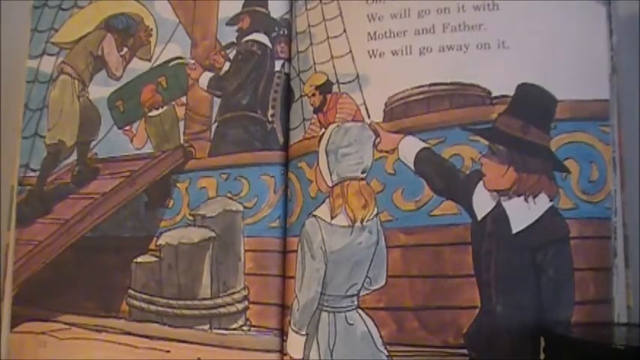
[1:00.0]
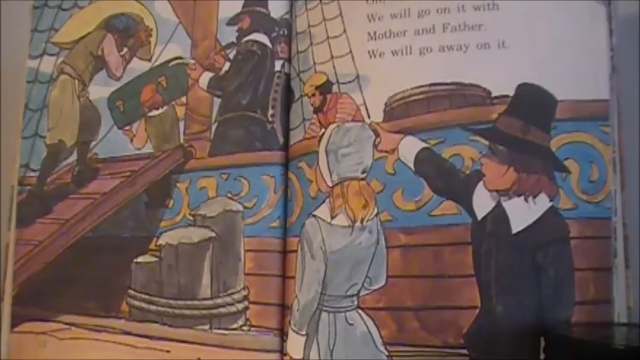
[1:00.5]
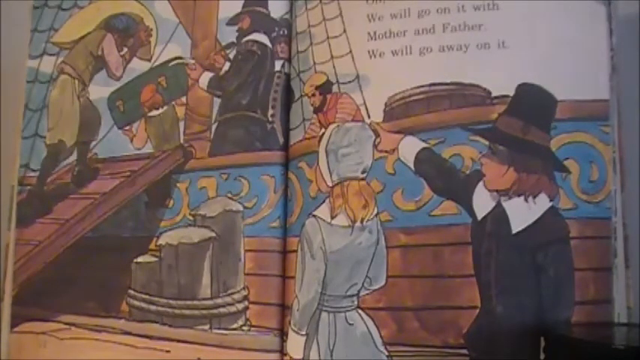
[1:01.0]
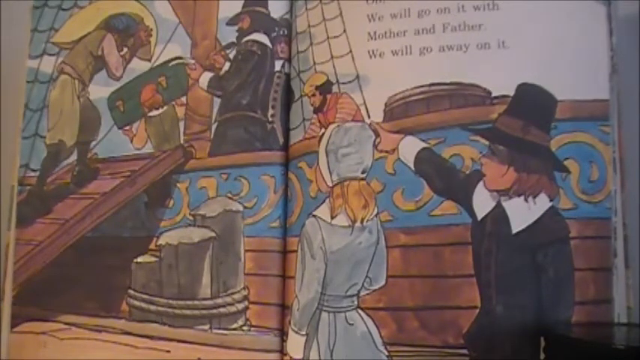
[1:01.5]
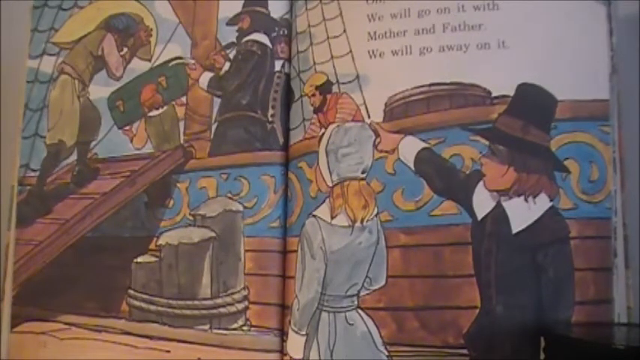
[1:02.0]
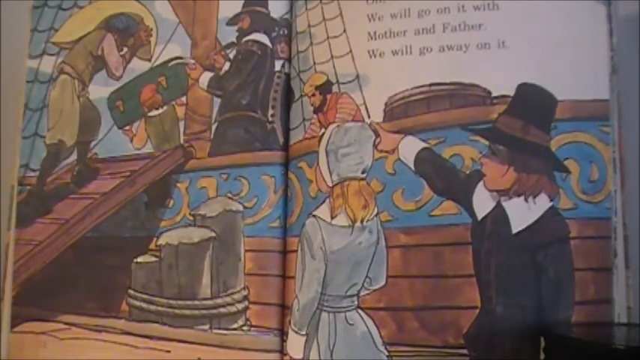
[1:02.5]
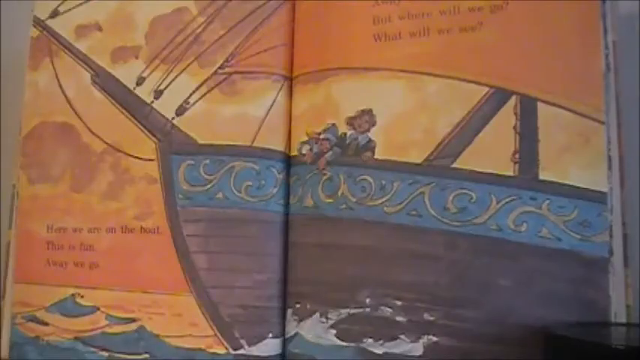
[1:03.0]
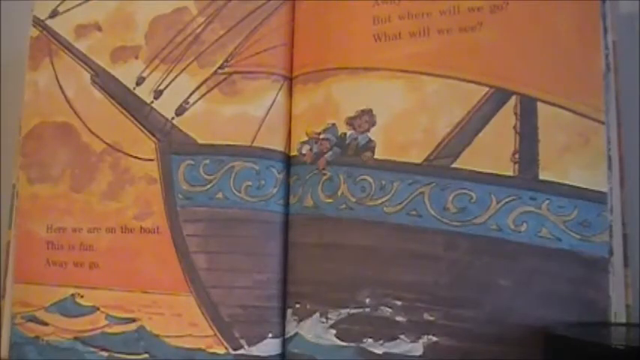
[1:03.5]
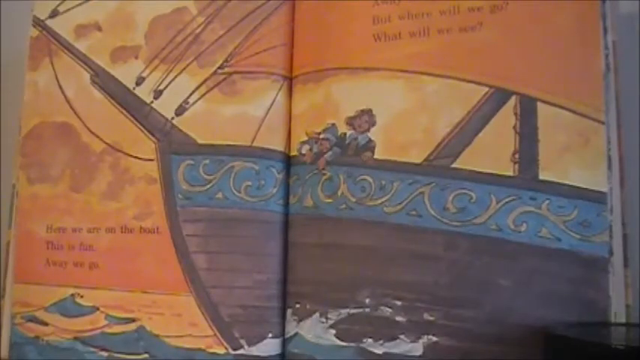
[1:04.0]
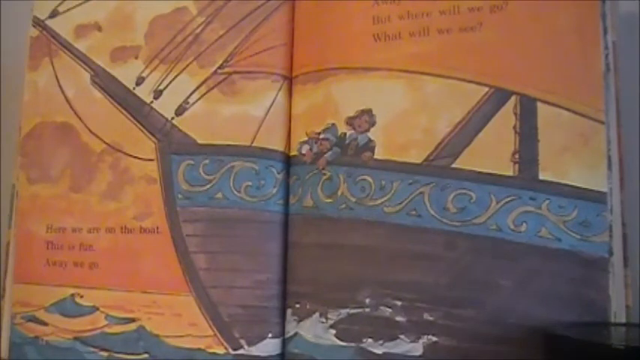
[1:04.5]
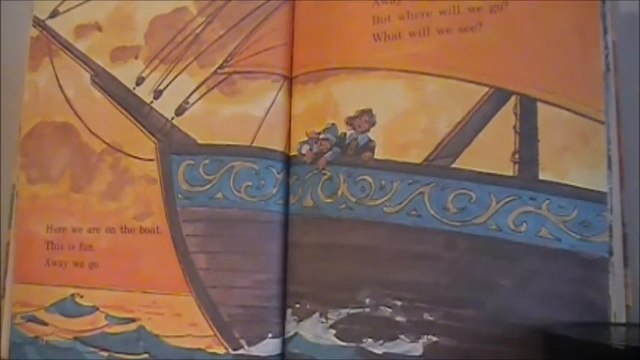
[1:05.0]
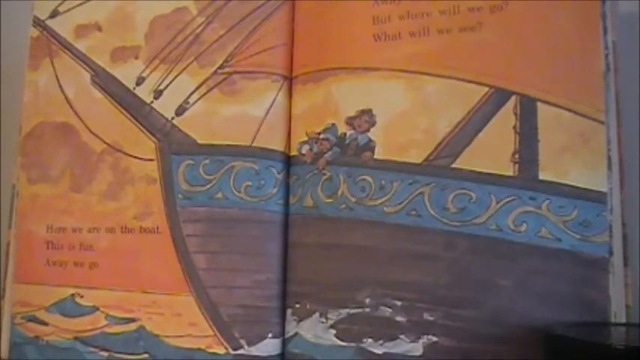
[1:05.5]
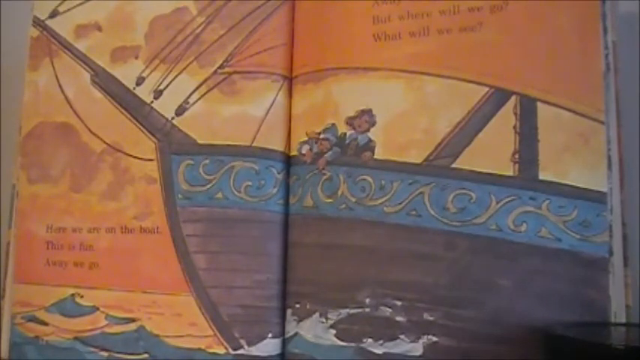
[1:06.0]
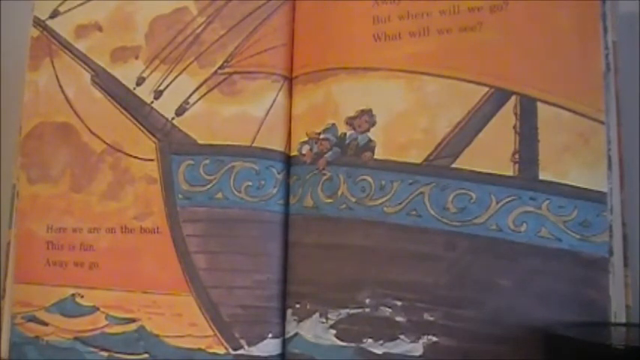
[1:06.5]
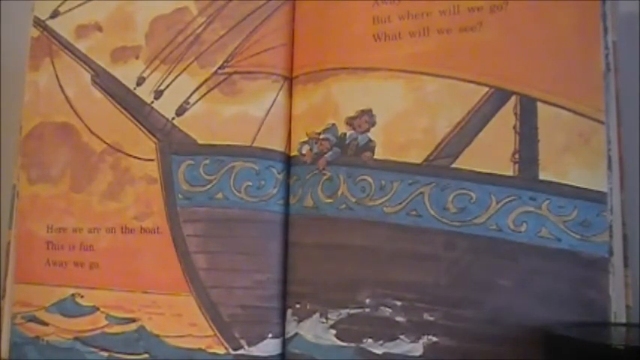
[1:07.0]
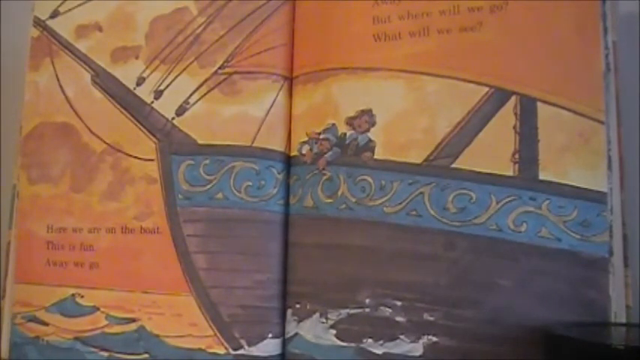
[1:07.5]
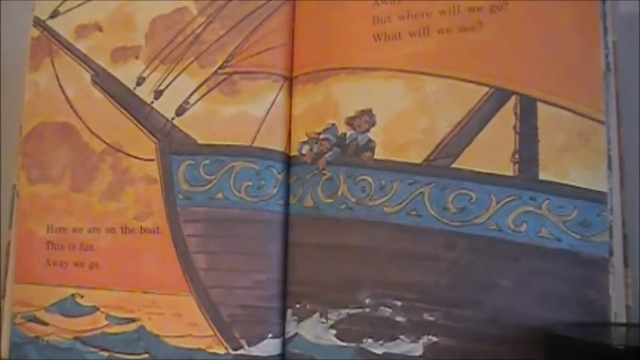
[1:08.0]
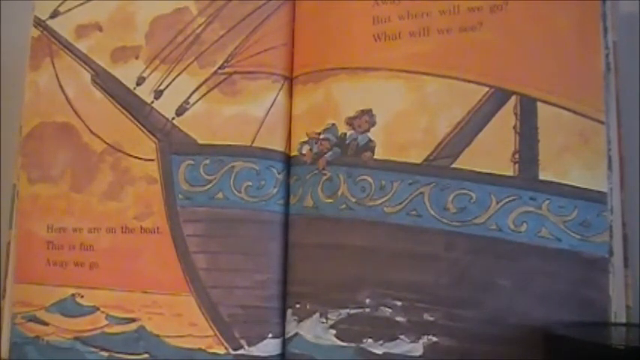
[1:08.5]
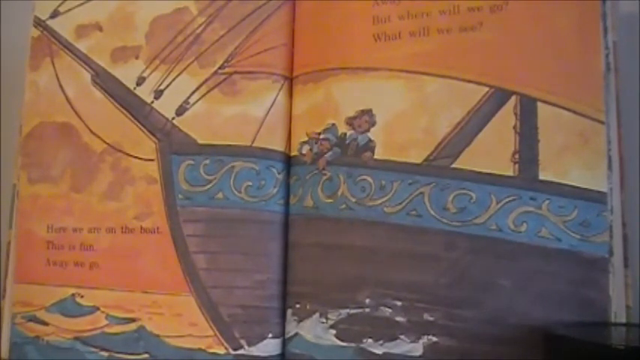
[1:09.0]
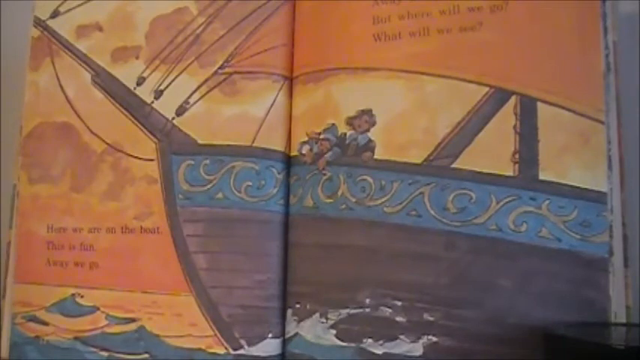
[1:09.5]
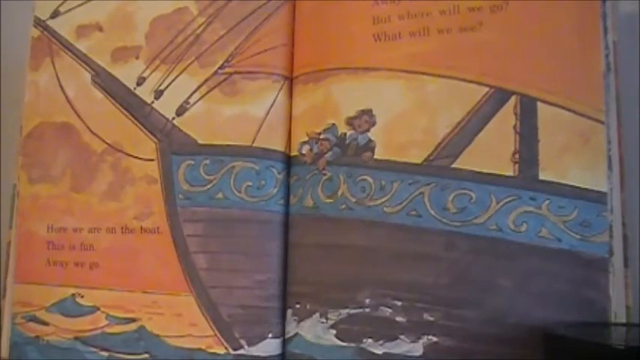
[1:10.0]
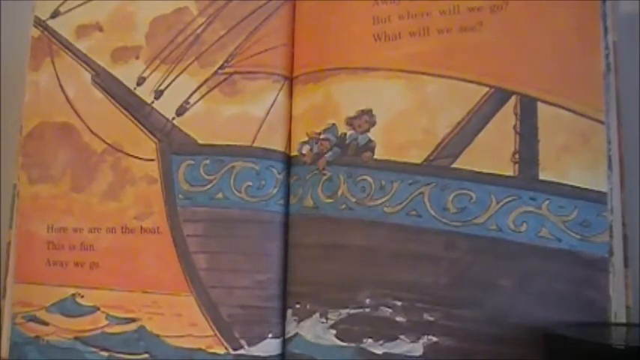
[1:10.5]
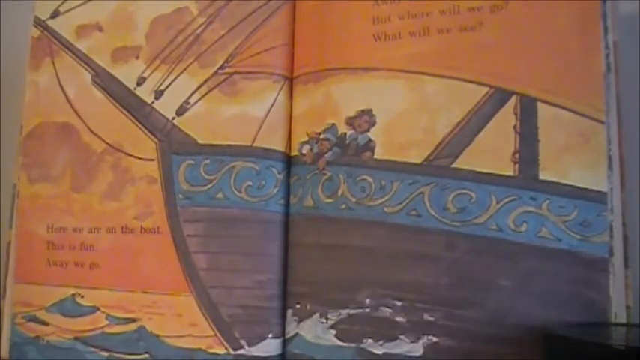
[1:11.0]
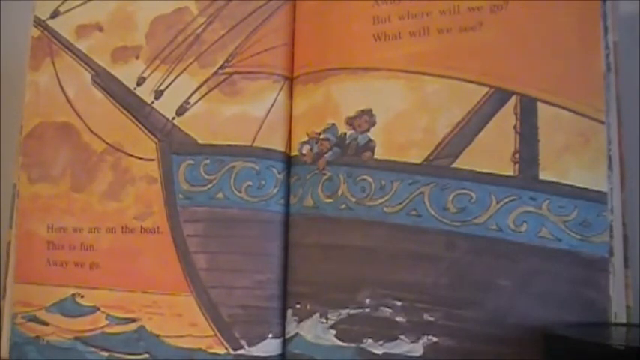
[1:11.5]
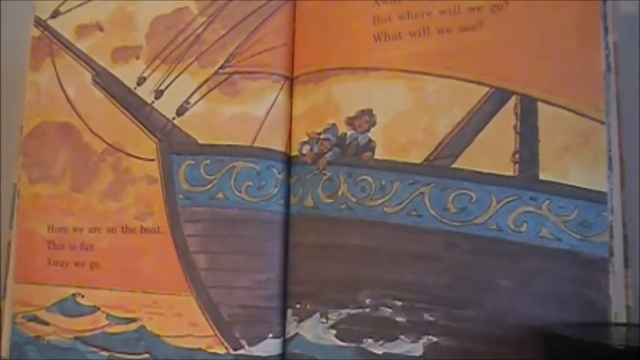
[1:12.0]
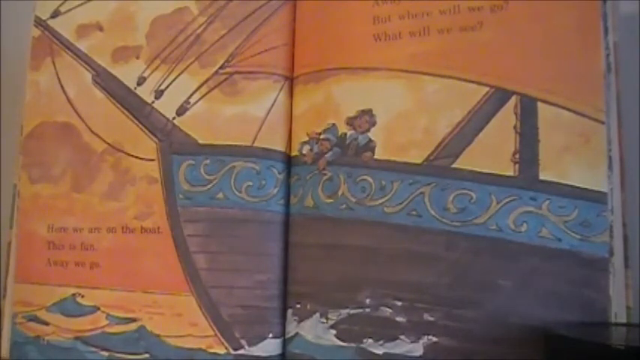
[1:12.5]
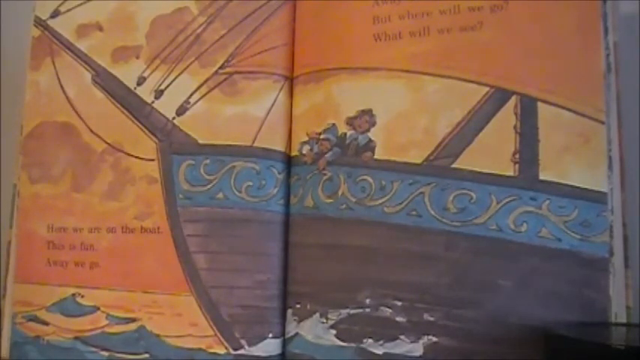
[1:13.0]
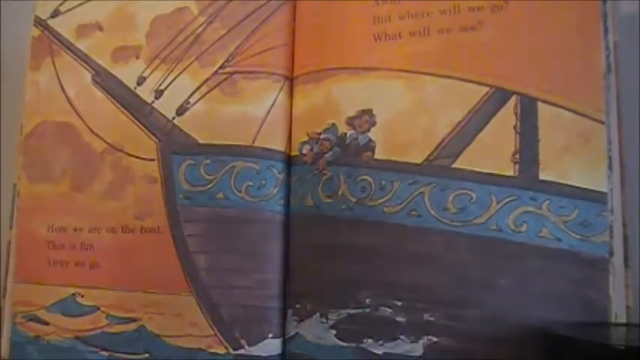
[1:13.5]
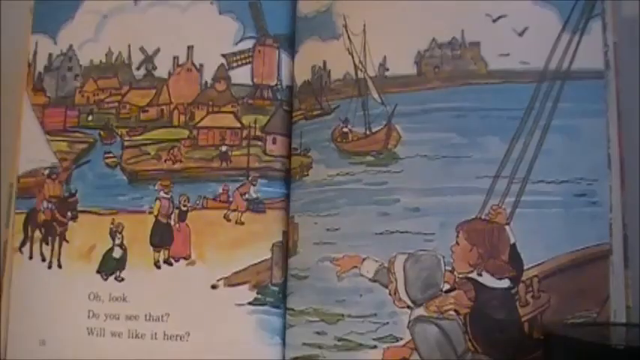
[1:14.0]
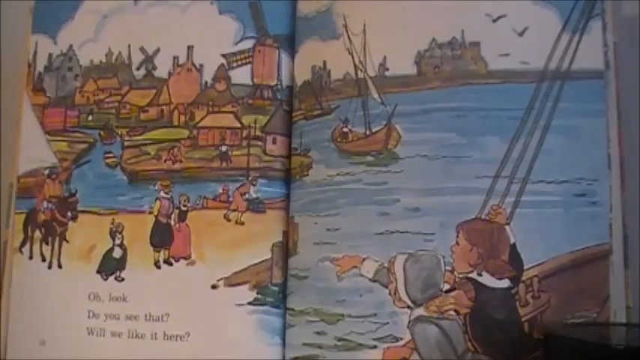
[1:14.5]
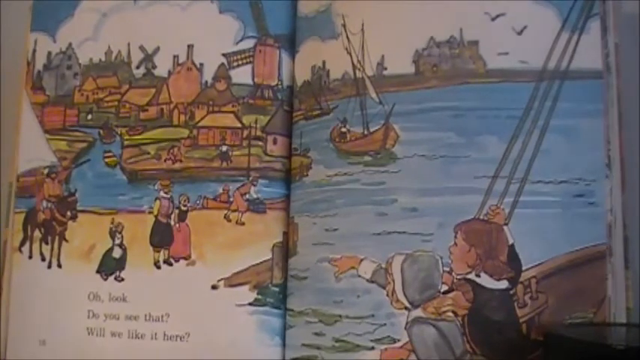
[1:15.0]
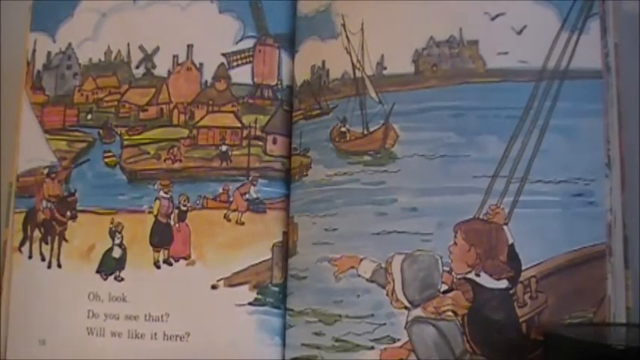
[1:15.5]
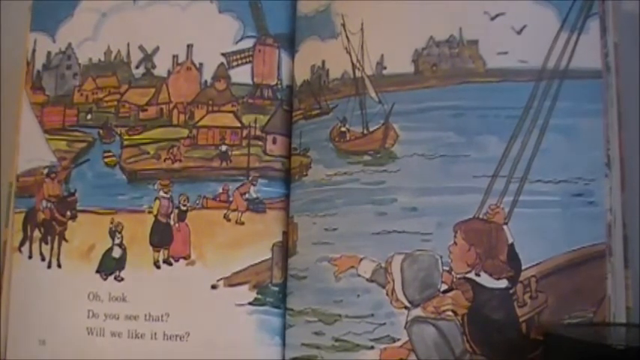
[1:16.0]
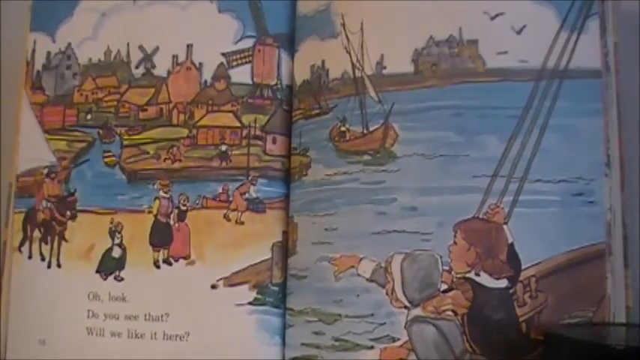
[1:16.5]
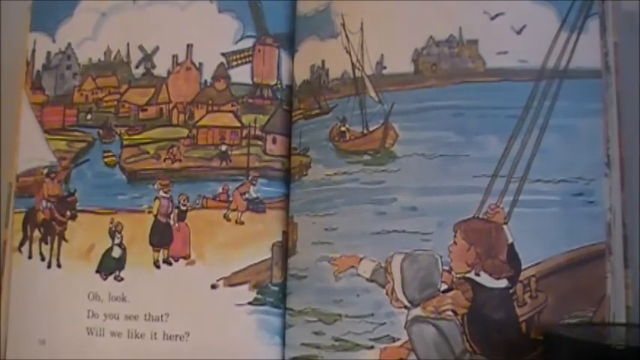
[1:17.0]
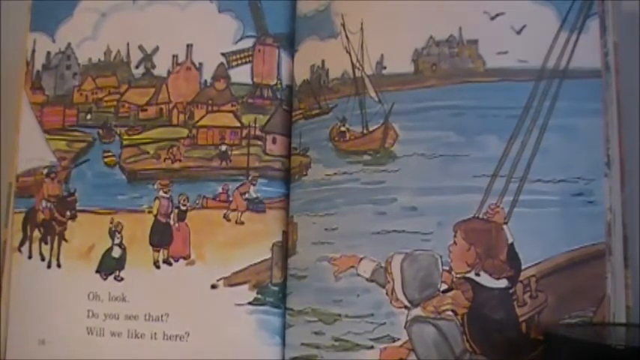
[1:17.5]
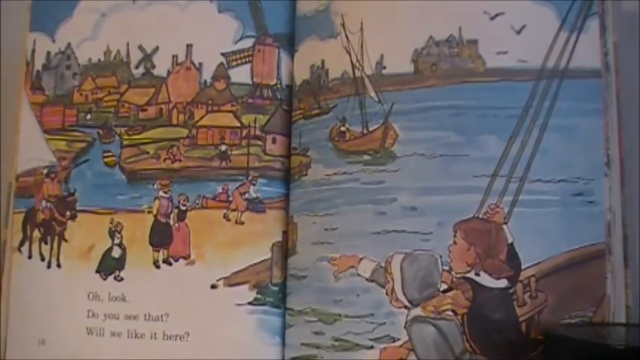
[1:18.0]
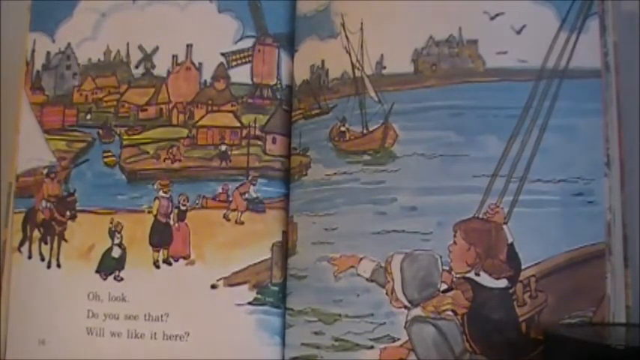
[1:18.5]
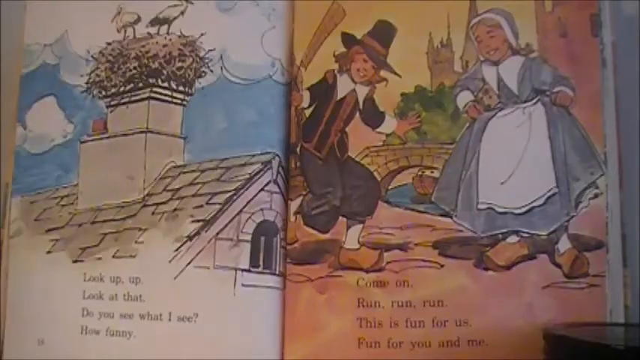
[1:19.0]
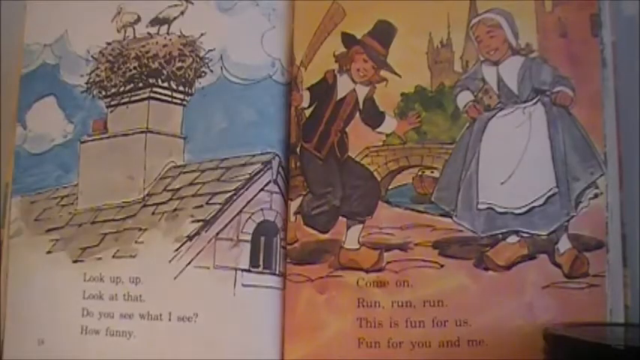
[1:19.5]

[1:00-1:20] The next open page is a double-page spread, as the pages have been so far. It shows a close-up of the front of the ship, with the two children from the cover looking over the side towards the viewer. It is a sunset scene: the sky is sort of orange, the ocean has an orangey hue, and the sail is orange too. The page flips to another double-page spread seen from the perspective of the two children looking up over the ship. They seem to have arrived at their destination, though it is far away and hard to tell. There is a new port with what looks like many houses, a windmill in the background, and a castle or big estate house at the back. On the shore some people are greeting them: apparently a man on a horse, another couple, and a woman waving.